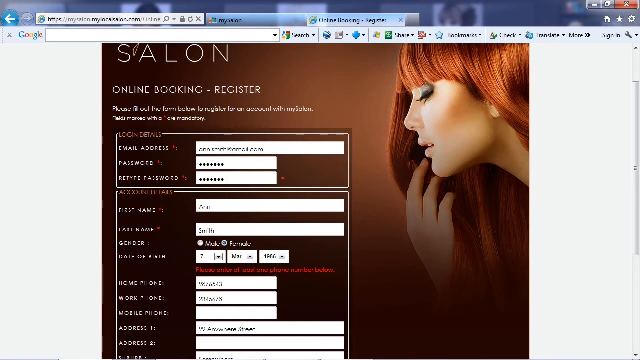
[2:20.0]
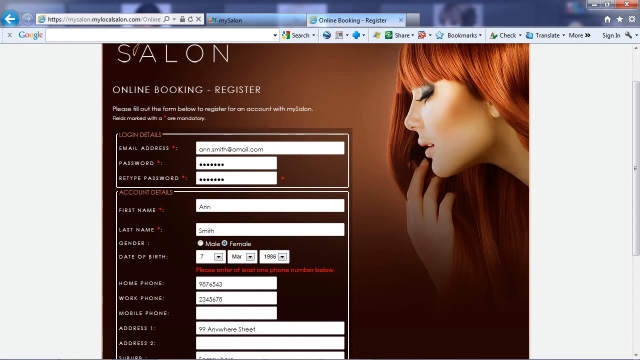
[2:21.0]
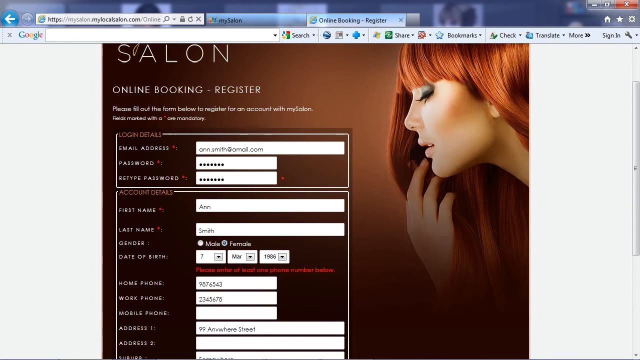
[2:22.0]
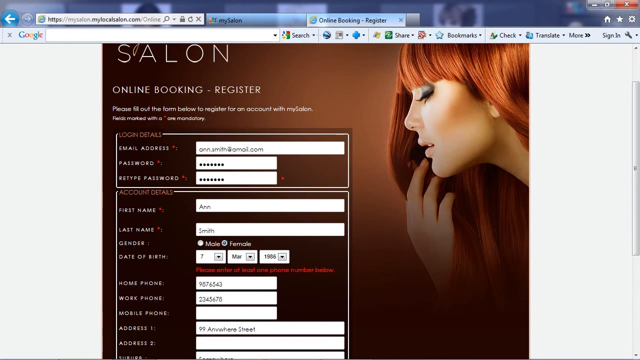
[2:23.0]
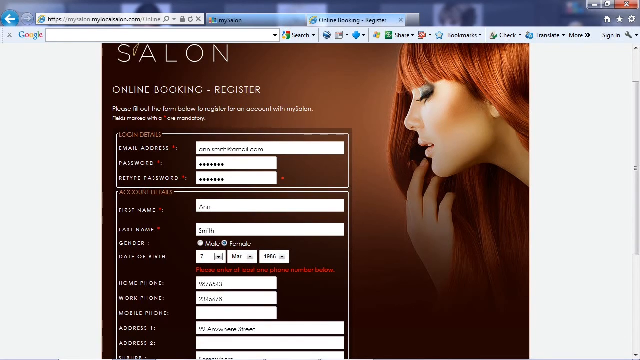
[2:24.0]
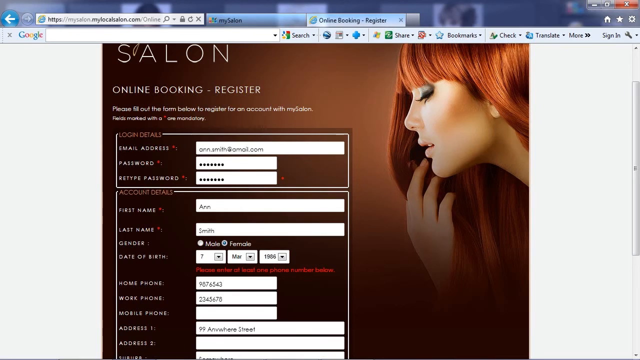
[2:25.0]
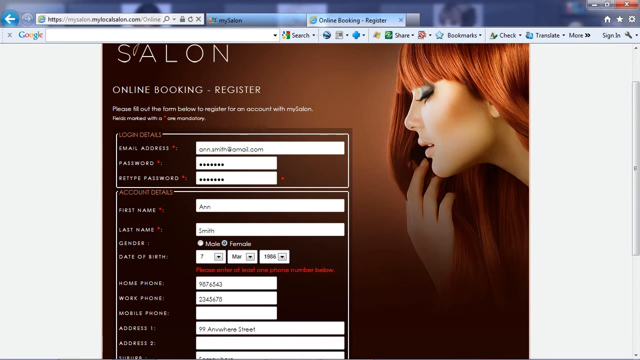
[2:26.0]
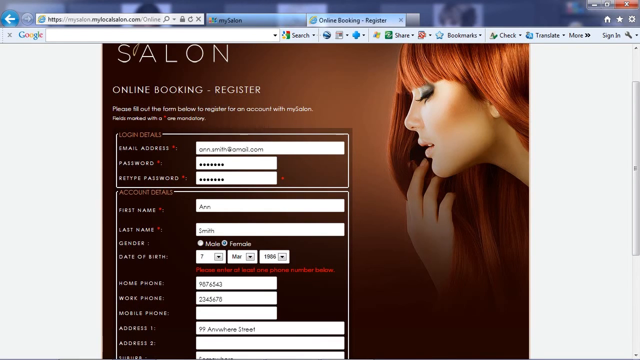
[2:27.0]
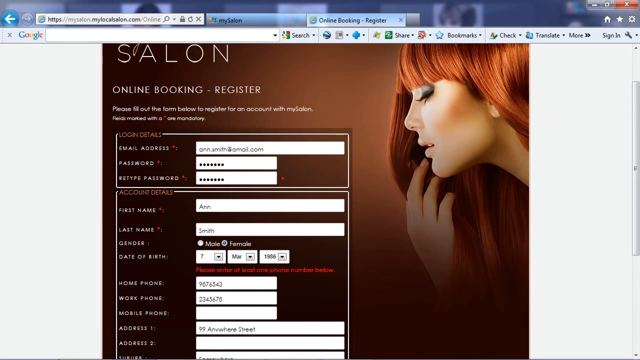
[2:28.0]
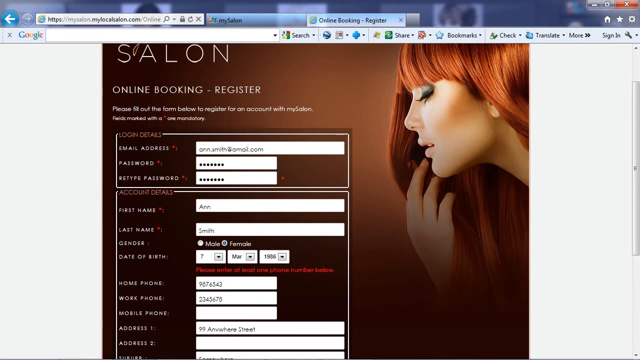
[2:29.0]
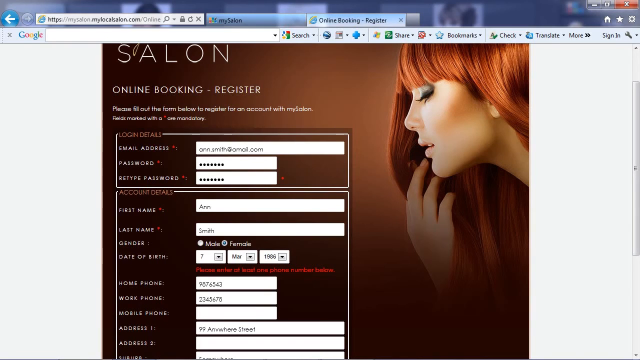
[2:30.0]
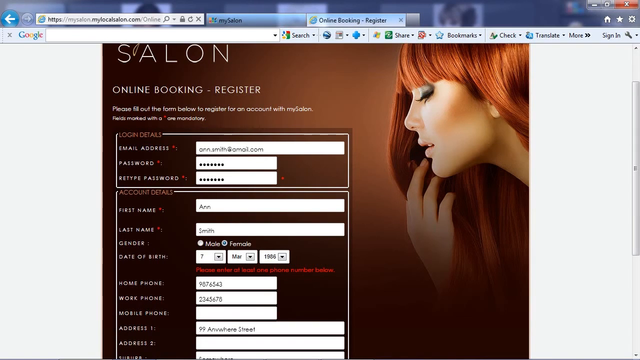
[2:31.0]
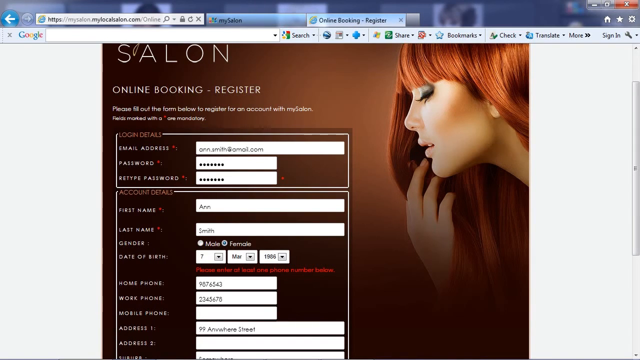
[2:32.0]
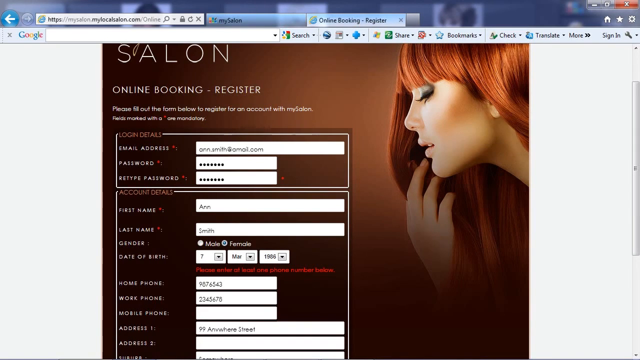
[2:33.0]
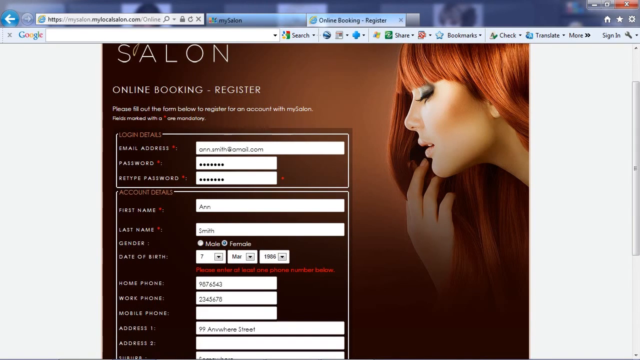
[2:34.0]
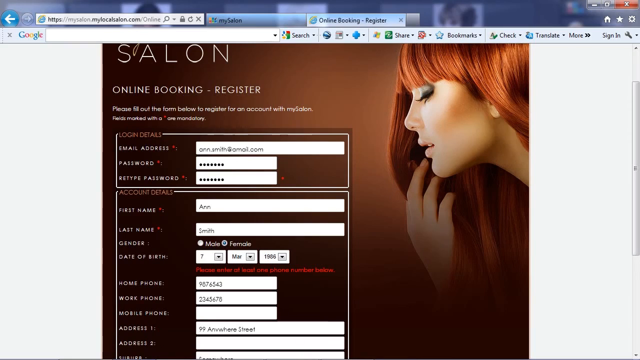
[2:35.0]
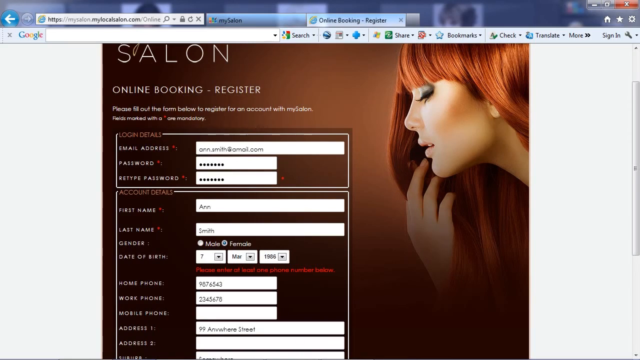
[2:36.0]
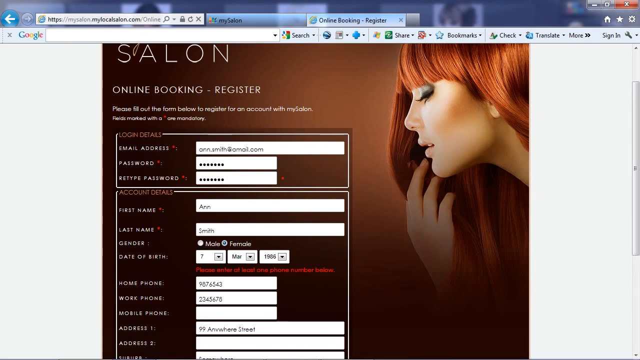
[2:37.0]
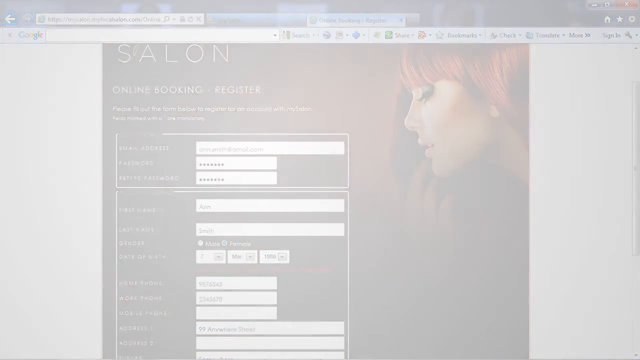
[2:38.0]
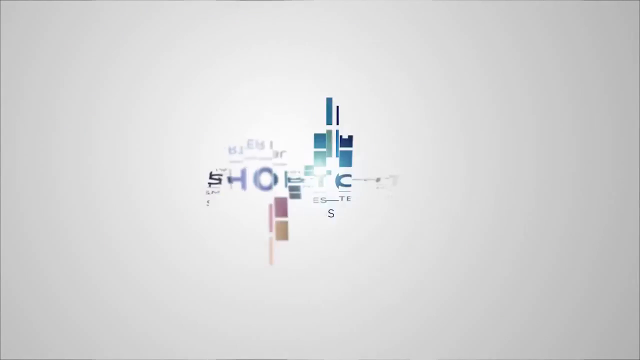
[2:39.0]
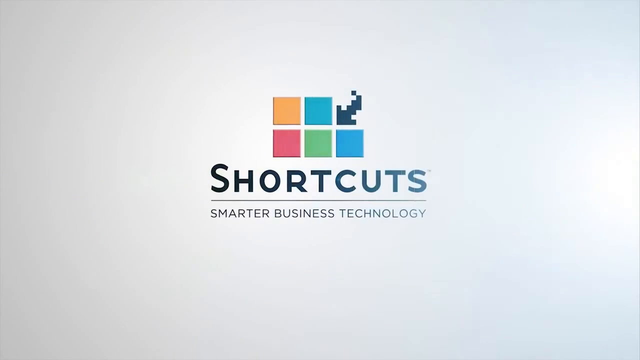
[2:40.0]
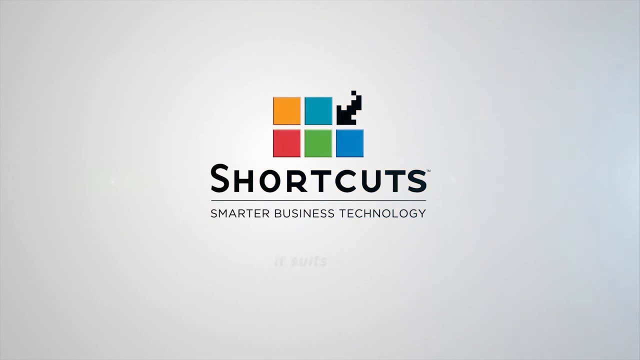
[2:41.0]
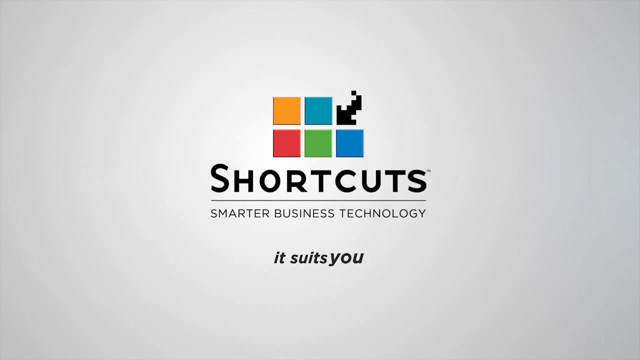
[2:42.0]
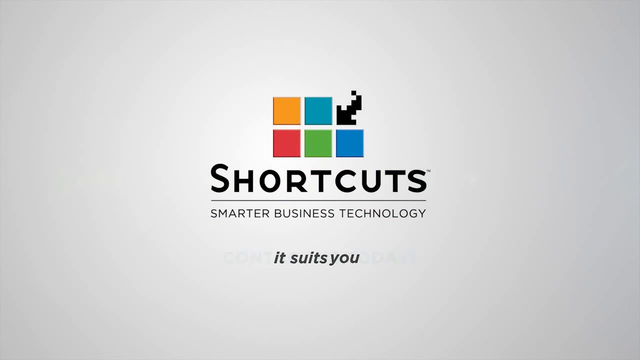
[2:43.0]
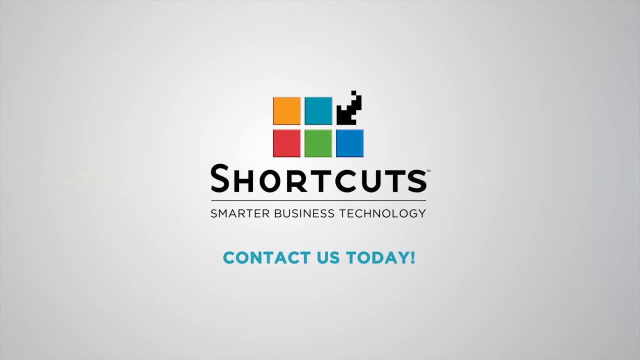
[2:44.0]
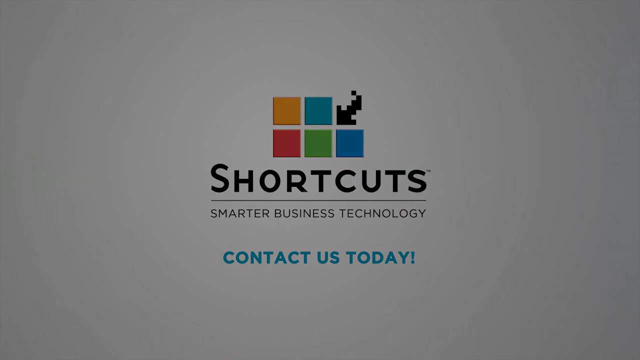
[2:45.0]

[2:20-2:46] The website shows all the names and their availability slots, including the times when people are not available.